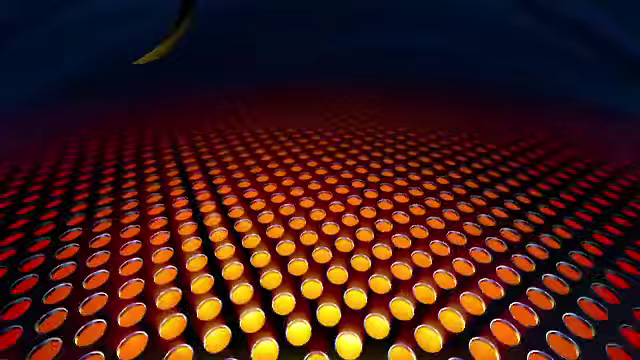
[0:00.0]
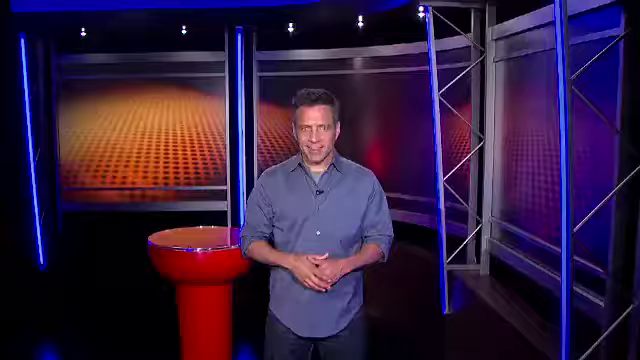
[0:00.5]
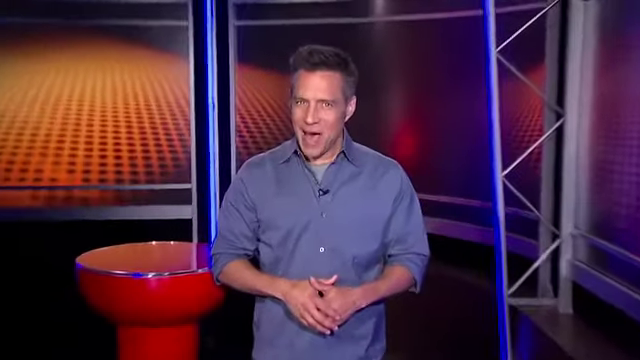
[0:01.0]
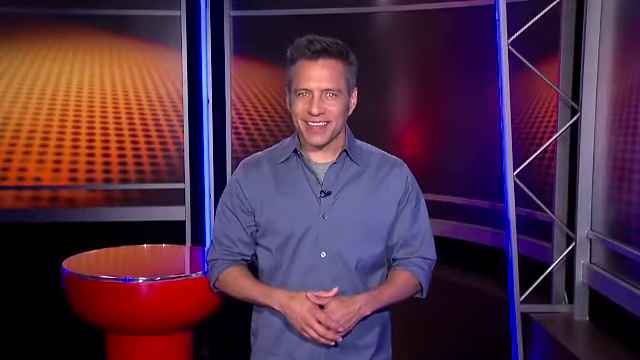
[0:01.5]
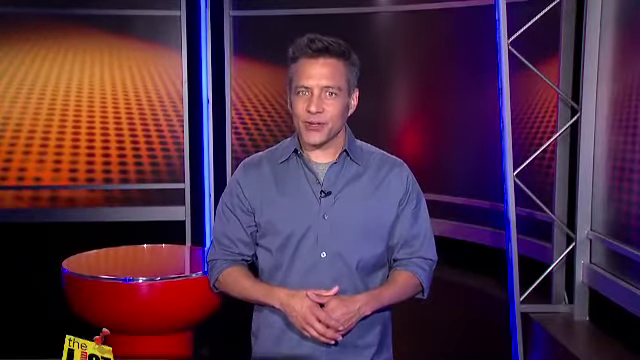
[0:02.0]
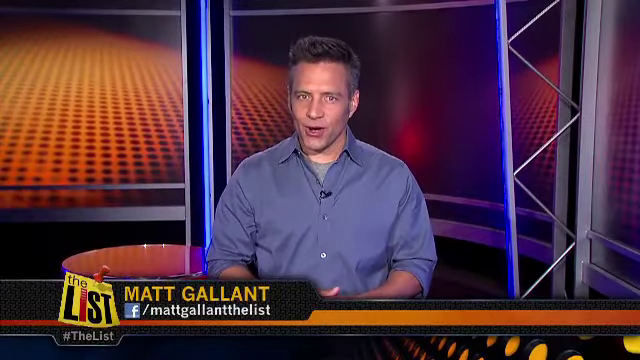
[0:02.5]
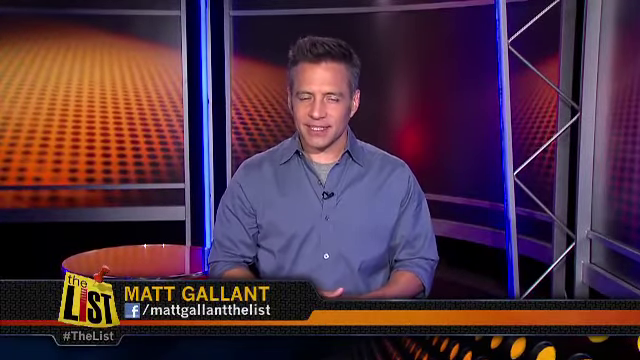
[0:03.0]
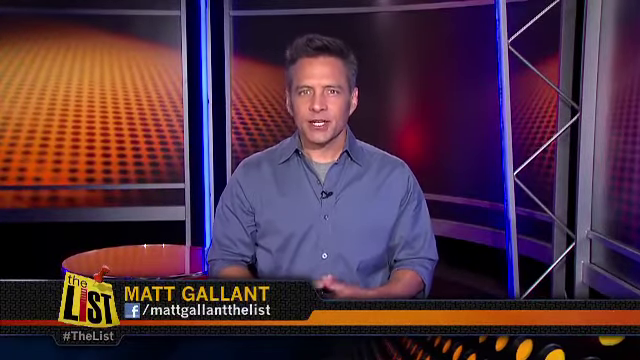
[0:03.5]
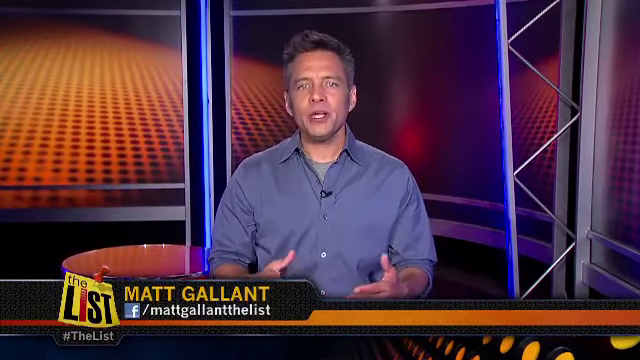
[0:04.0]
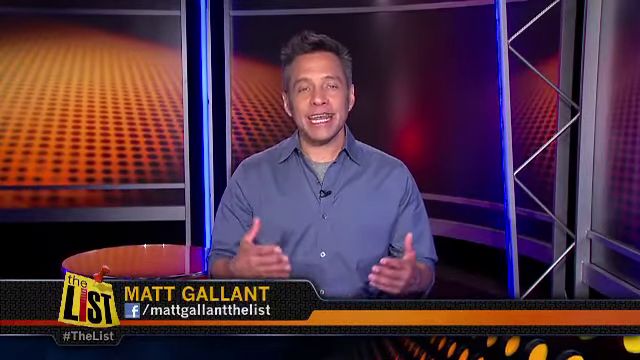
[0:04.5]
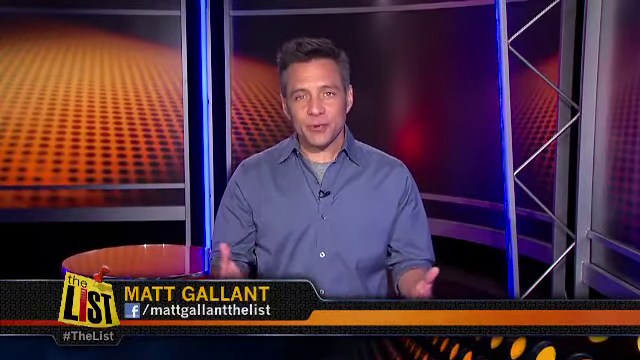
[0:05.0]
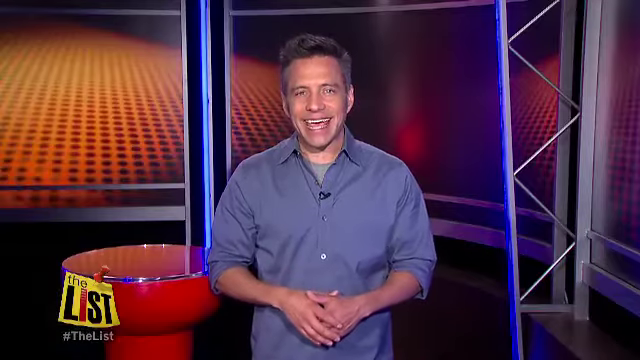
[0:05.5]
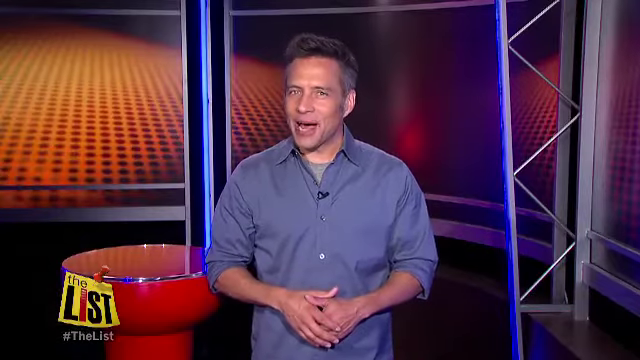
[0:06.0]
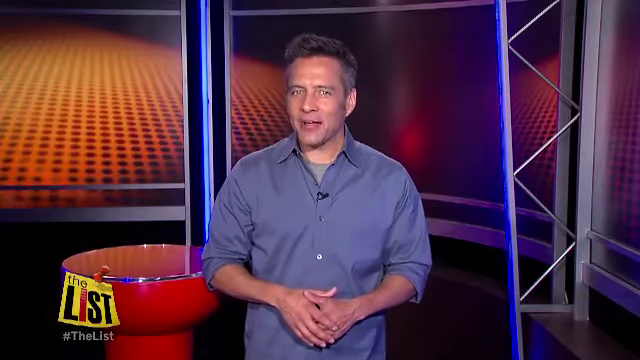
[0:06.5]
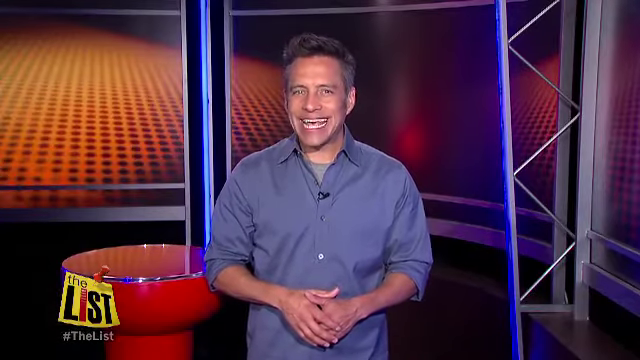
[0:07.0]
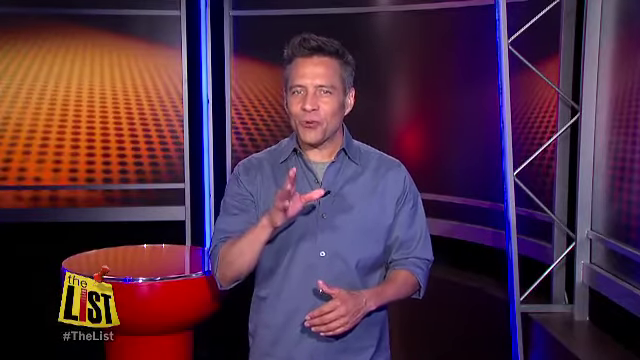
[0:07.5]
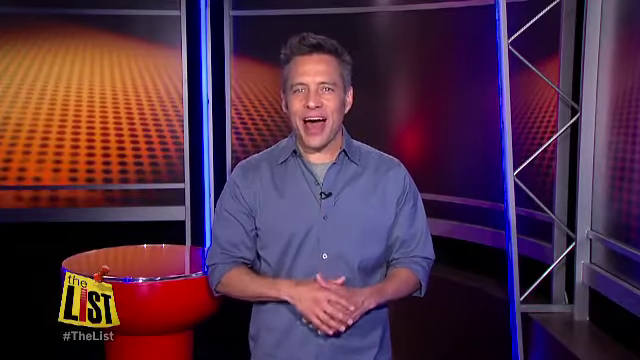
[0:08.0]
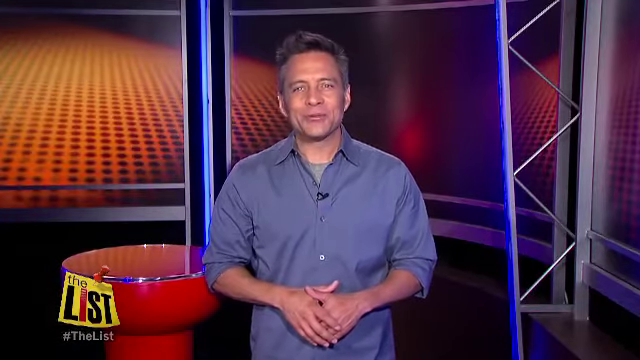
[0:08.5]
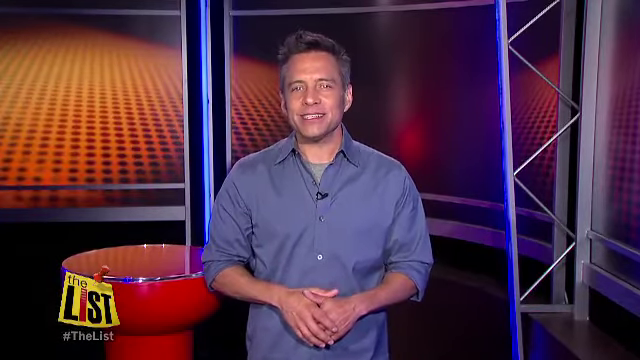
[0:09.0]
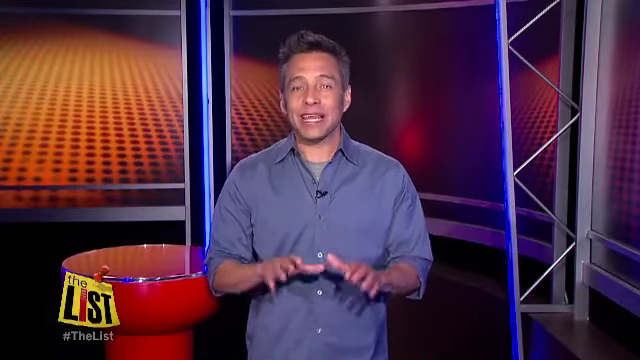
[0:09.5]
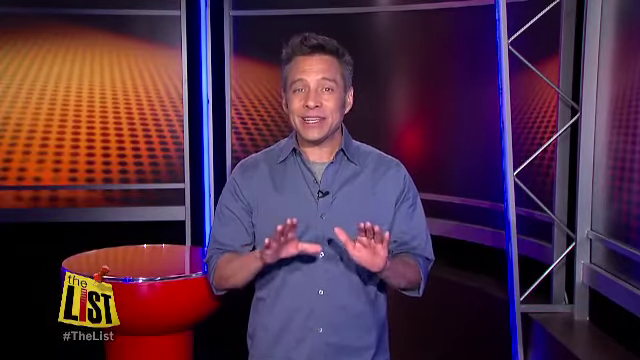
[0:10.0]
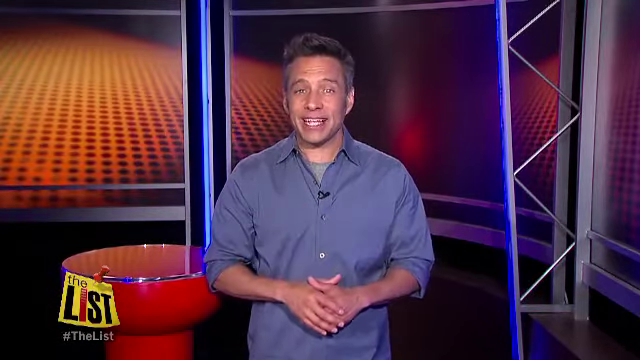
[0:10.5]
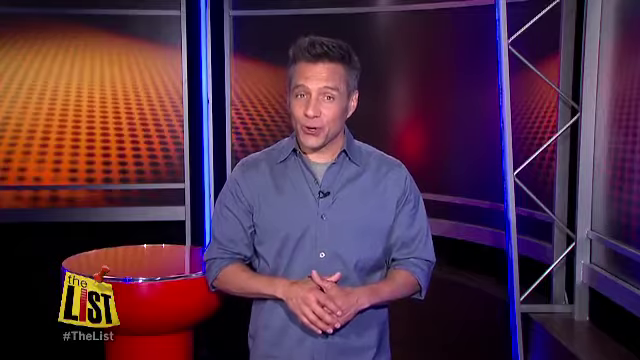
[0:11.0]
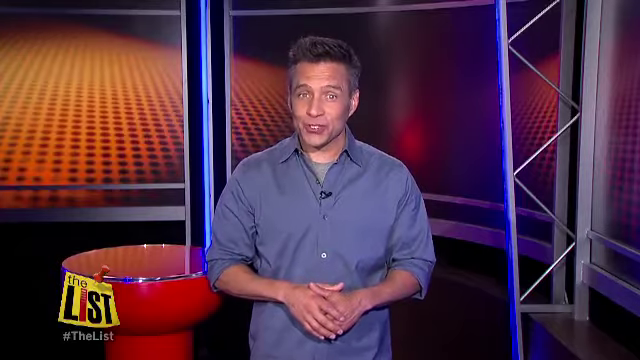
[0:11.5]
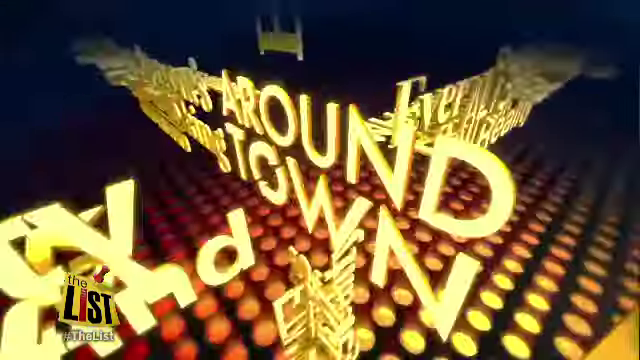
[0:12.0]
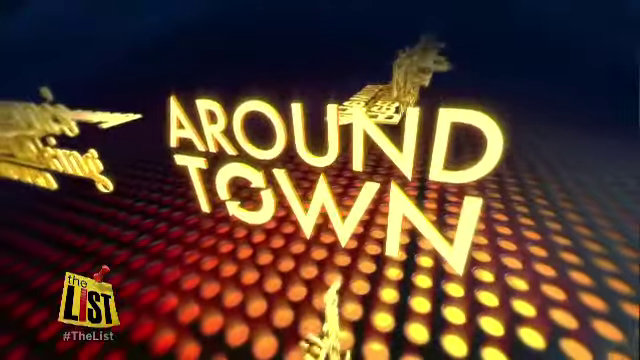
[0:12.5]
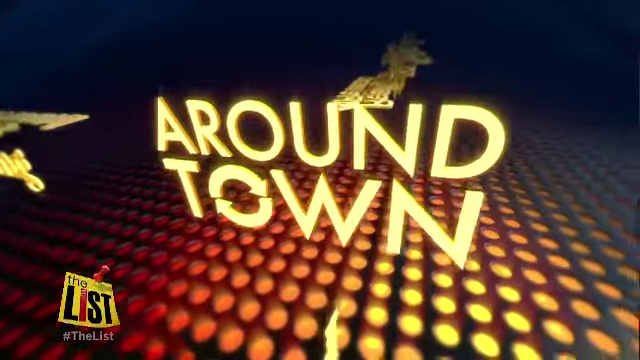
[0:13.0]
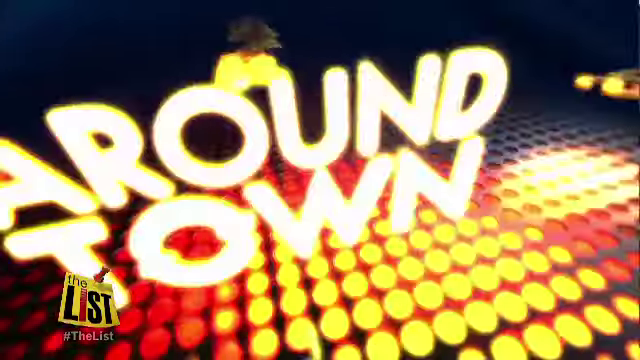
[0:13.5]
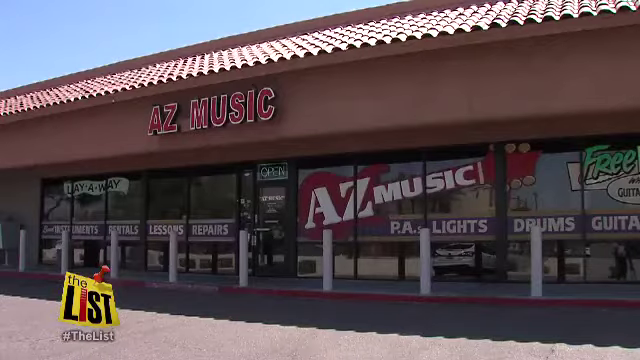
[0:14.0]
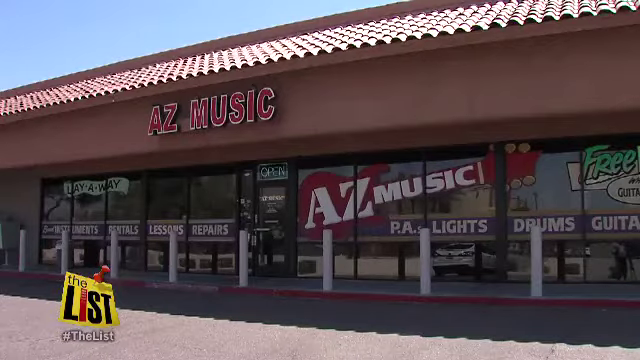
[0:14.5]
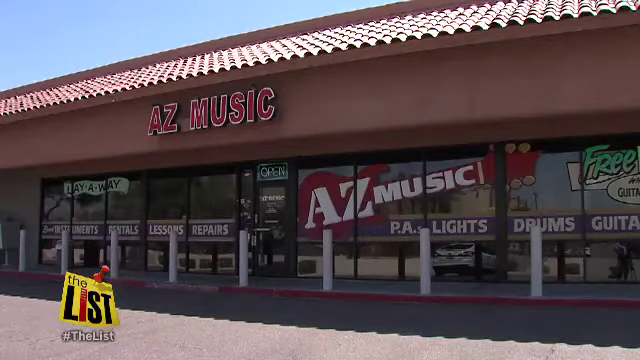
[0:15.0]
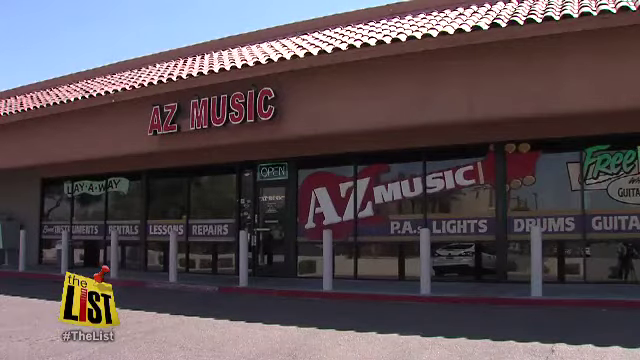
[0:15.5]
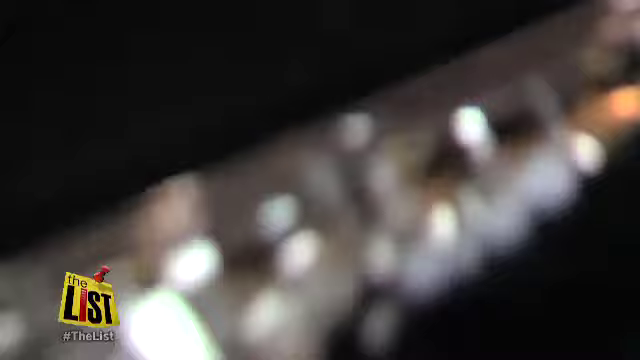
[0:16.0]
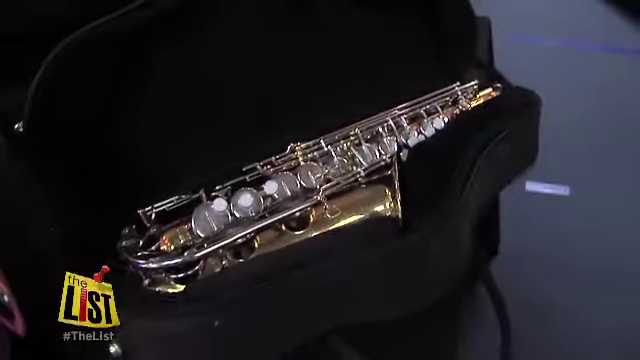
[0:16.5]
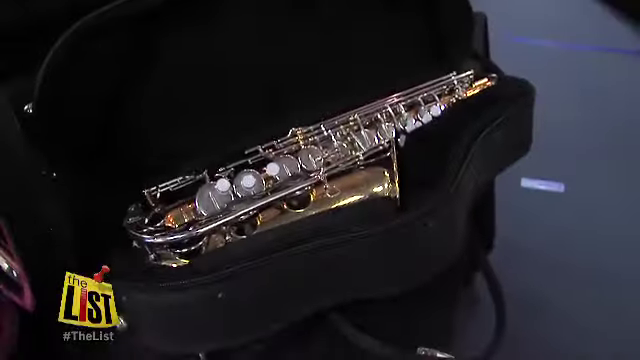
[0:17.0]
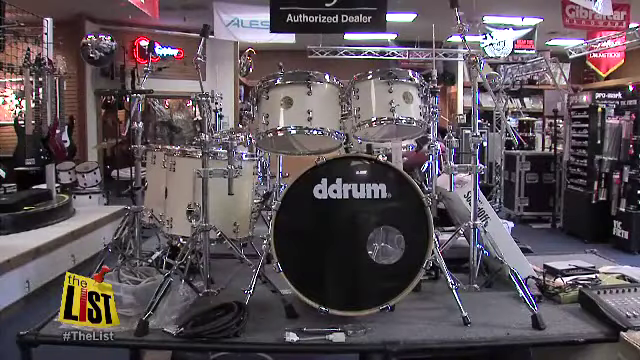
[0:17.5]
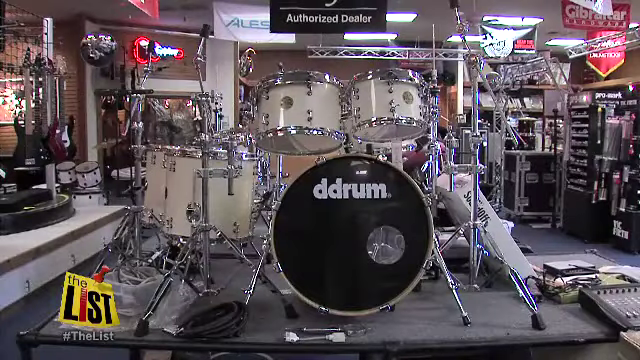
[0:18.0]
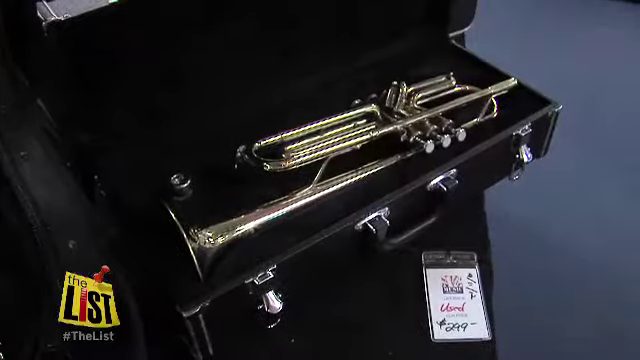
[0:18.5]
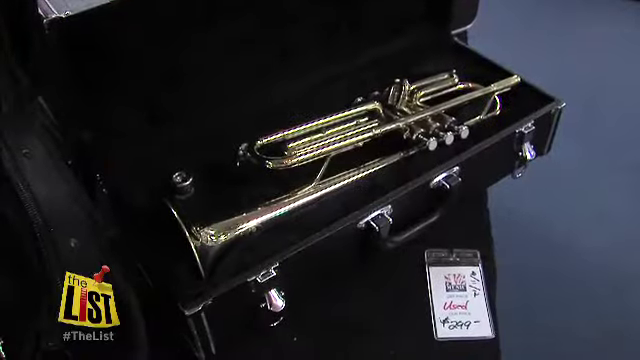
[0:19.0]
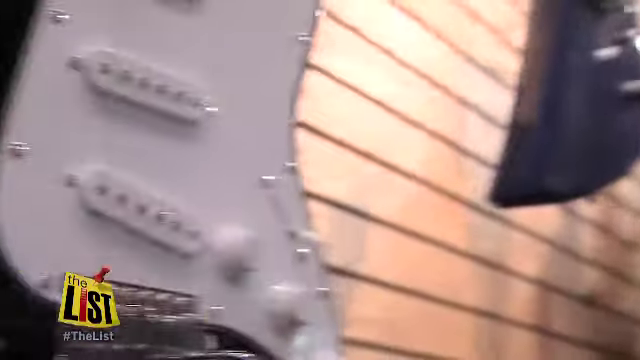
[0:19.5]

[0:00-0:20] The opening scene shows a man, a newscaster or host of a show. His name, "Matt Gallant," is written in yellow text in the lower left corner of the screen. The words "the list" appear in a sort of logo with a push pin: a yellow square that reads "the list" in black and red text. A Facebook "F" logo also appears along with "Matt Gallant" and "the list." Matt looks to be about 40 and wears an office-style blue collared shirt with rolled-up sleeves and a T-shirt beneath, with a black microphone on his shirt. He is Caucasian with dark hair and attractive. The background appears to be a news studio of some sort, with a somewhat patterned red and black image on the screens. He smiles and talks to the camera, holding his hands together and using quite a bit of hand motion. The screen then reads "around the town" and shows an image of a music store, with close-up views of instruments on display.